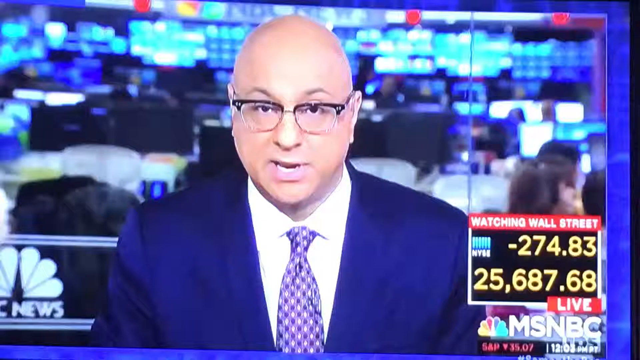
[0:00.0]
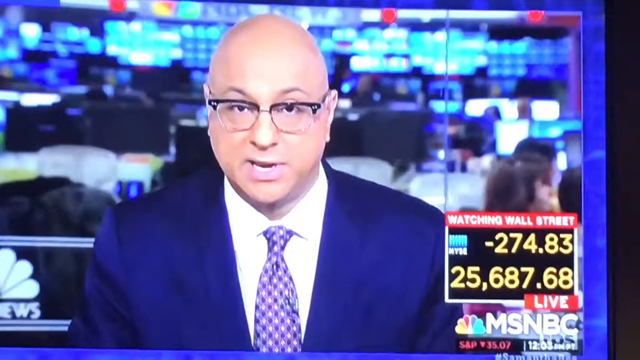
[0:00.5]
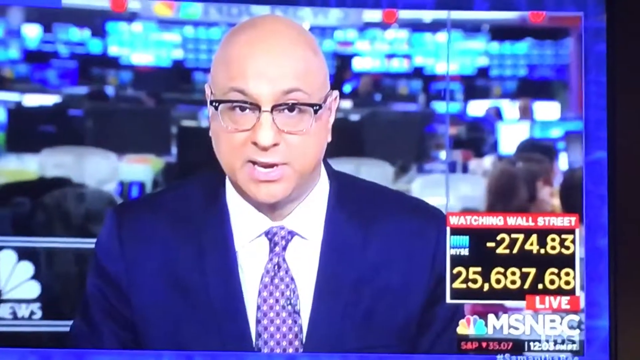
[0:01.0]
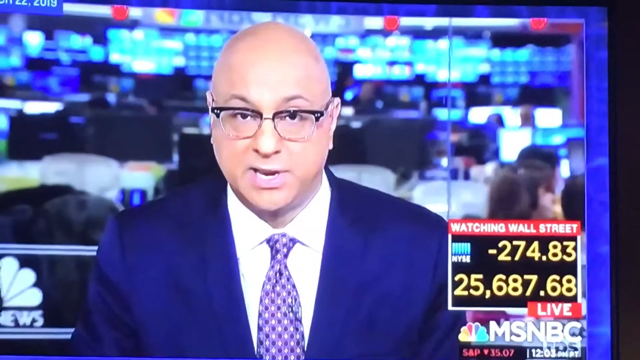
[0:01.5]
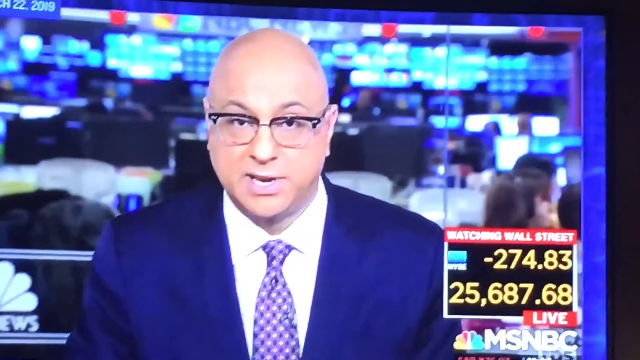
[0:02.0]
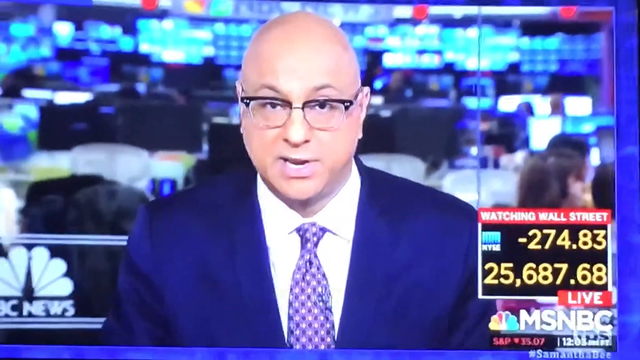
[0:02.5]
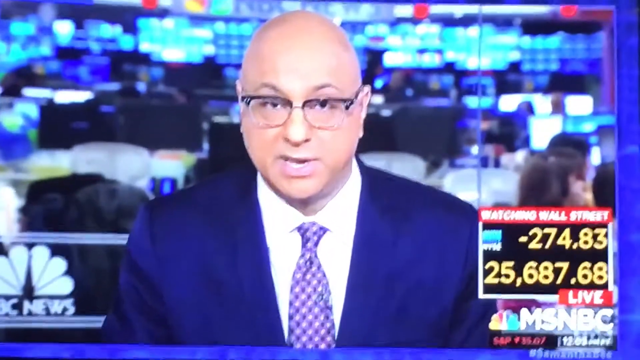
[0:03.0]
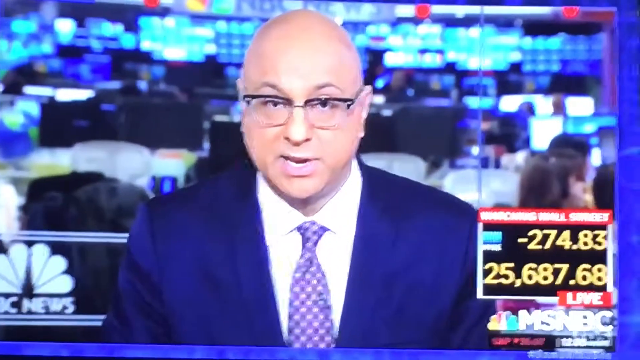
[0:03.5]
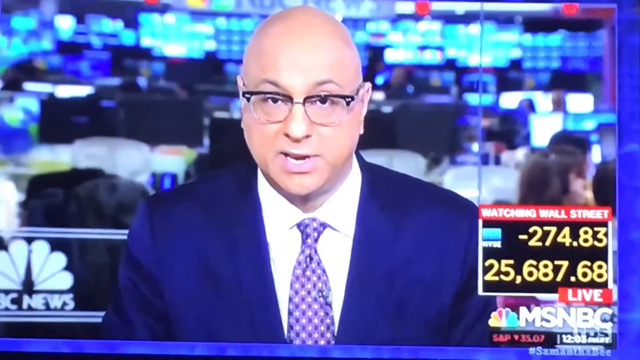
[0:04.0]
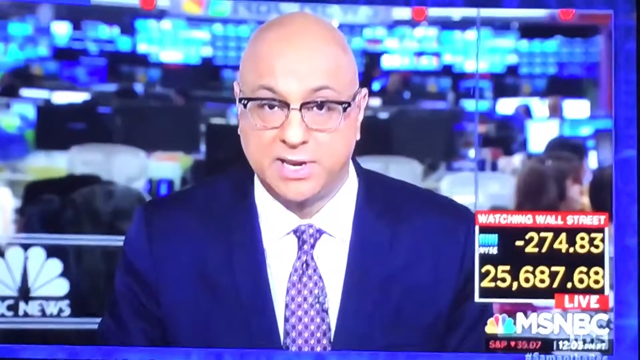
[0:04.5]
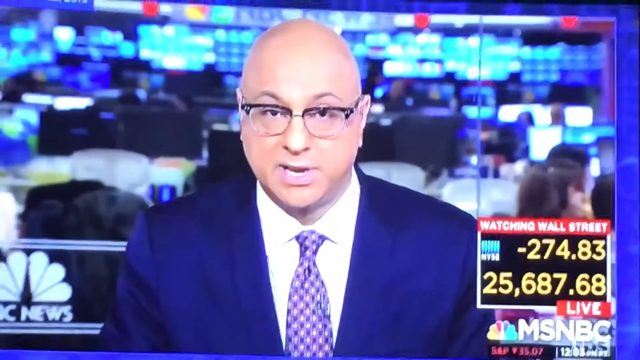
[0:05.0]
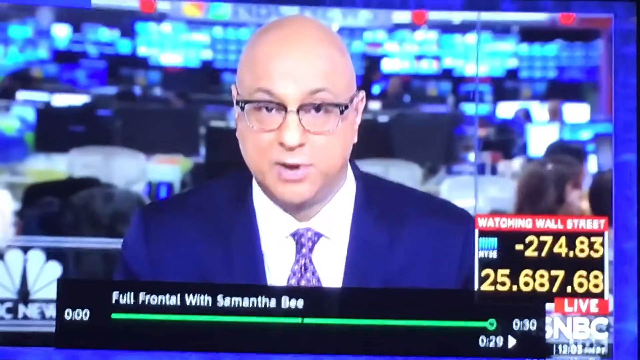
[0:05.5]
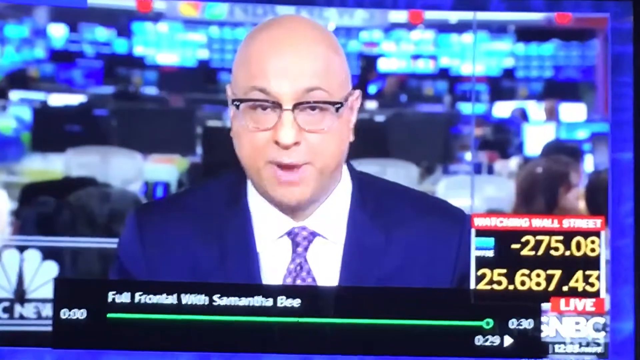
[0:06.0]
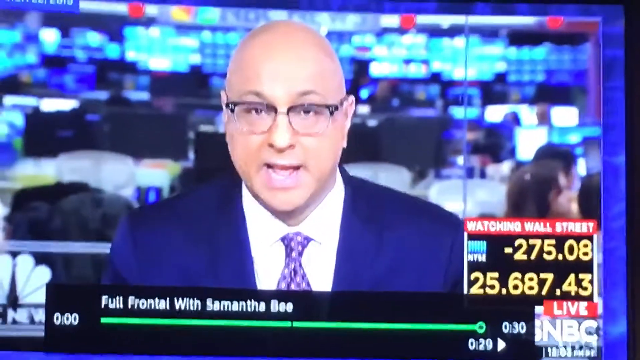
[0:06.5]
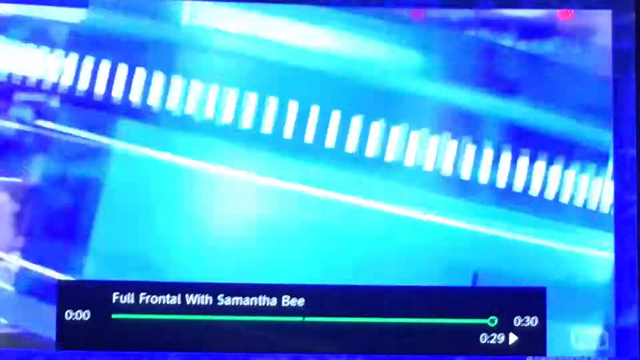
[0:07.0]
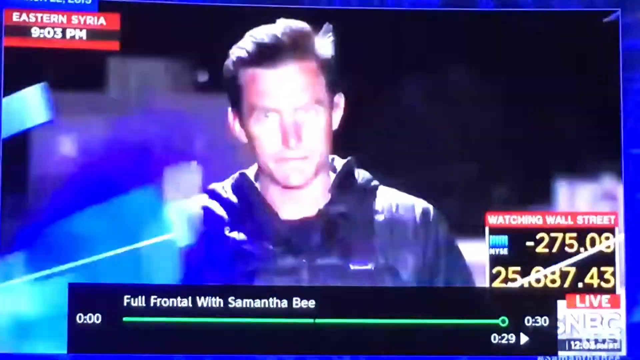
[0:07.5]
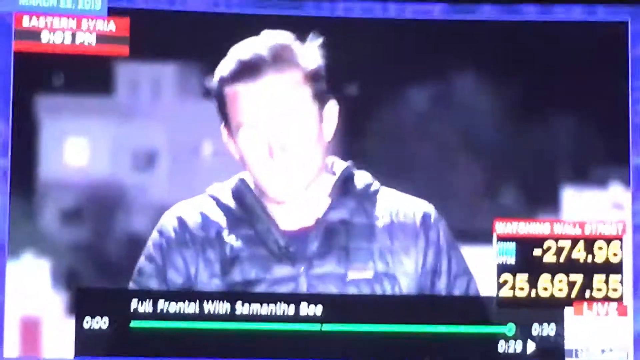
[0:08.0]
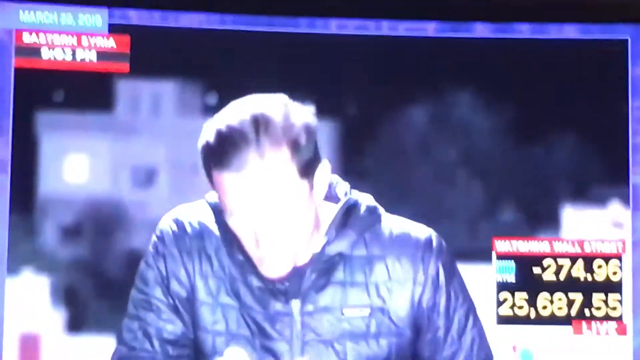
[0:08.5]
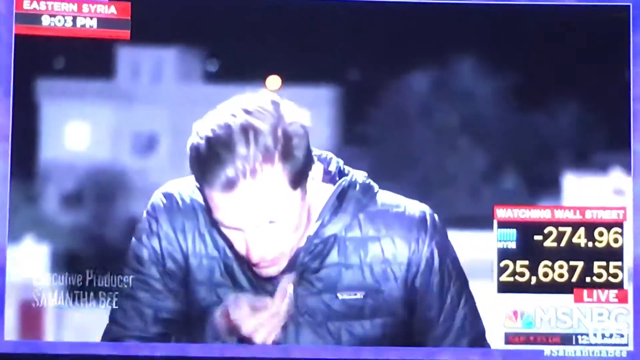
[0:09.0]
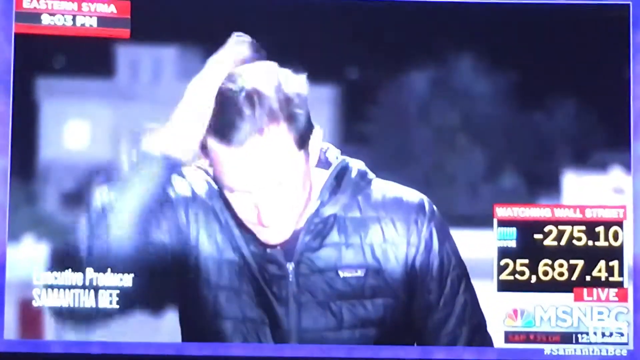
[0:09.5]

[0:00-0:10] The video shows a screen that is frozen while the camera kind of moves around. Then it starts to play, and white text on the screen reads "Full Frontal with Samantha Bee"; it looks like it was paused and then someone unpaused it. The NBC News logo is in the bottom-left corner, and "watching Wall Street" appears in white text on a red rectangle in the bottom-right corner with some yellow stock information. A man wearing a puffy black jacket is then shown. His face is hard to see because a reflection on the TV screen kind of blots it out, but he seems to spit in his hand and then smooth his hair back, as if slicking it back. The background behind him is dark and it takes place at night; there might be some kind of building in the background. White text in the bottom-left corner reads "Executive Producer Samantha Bee".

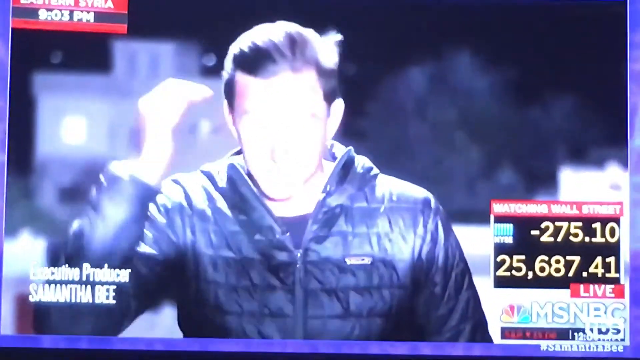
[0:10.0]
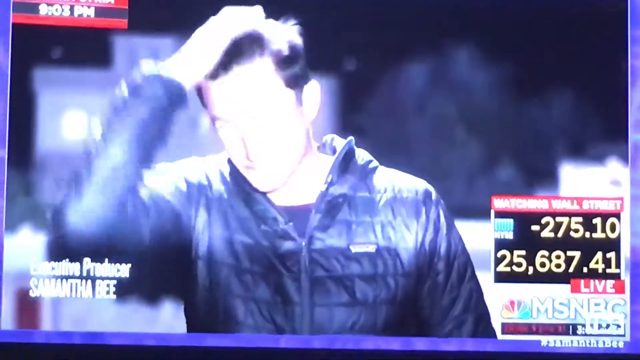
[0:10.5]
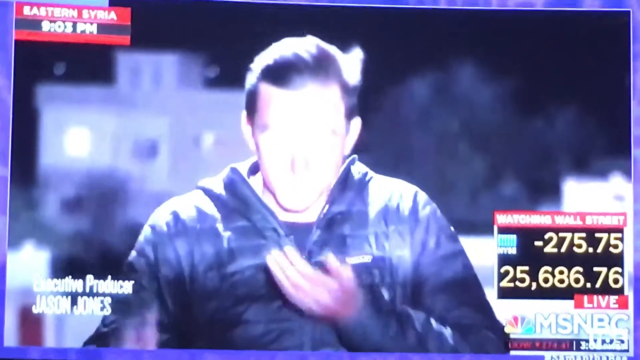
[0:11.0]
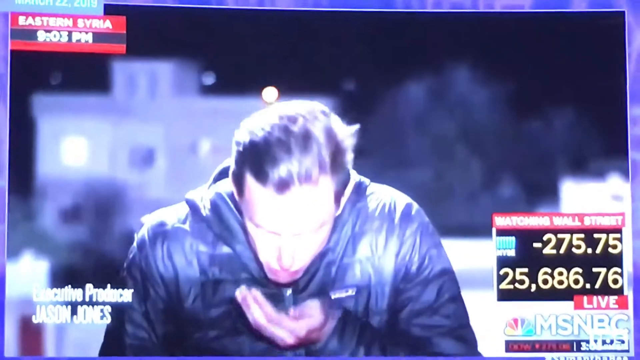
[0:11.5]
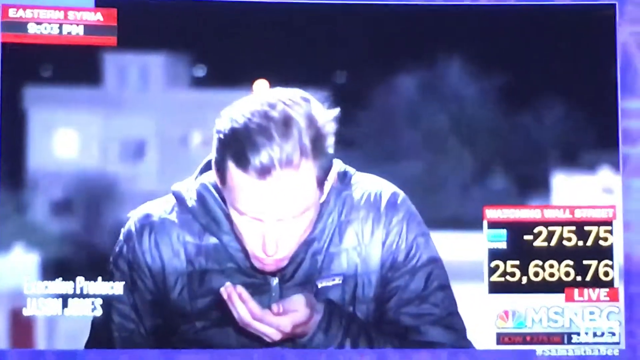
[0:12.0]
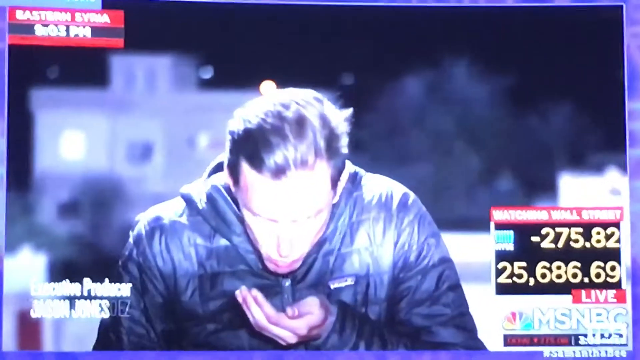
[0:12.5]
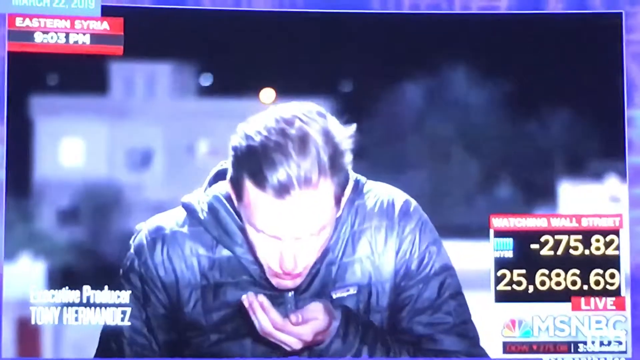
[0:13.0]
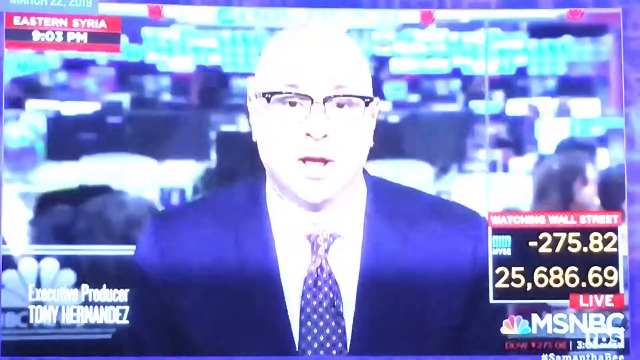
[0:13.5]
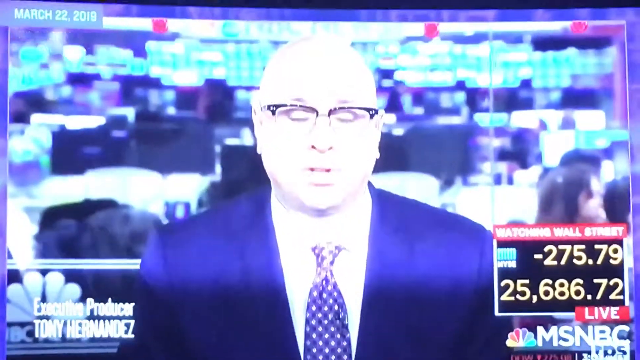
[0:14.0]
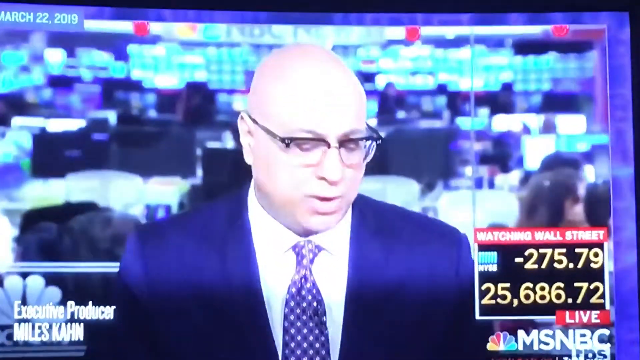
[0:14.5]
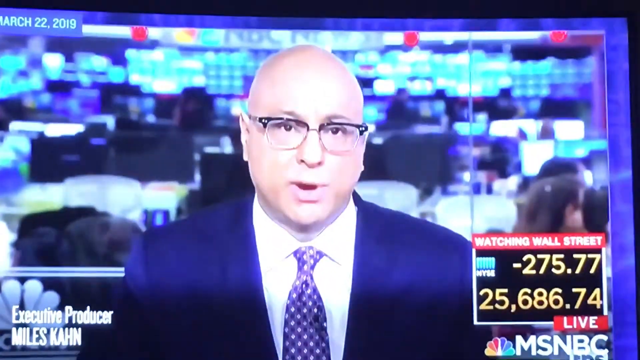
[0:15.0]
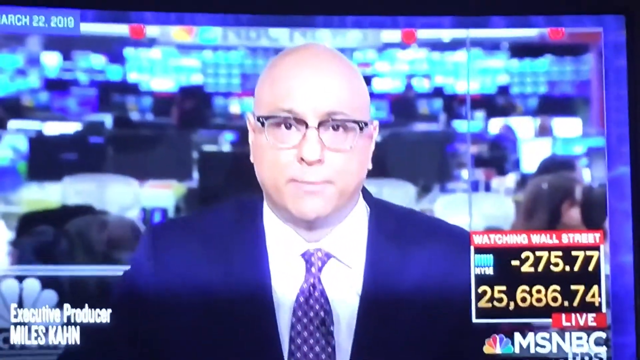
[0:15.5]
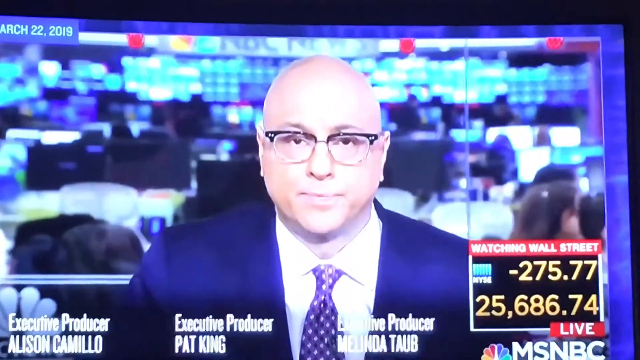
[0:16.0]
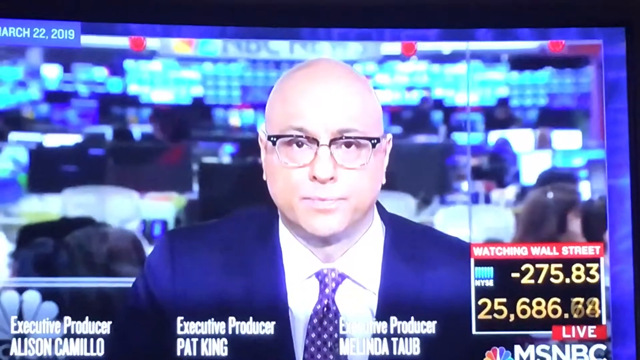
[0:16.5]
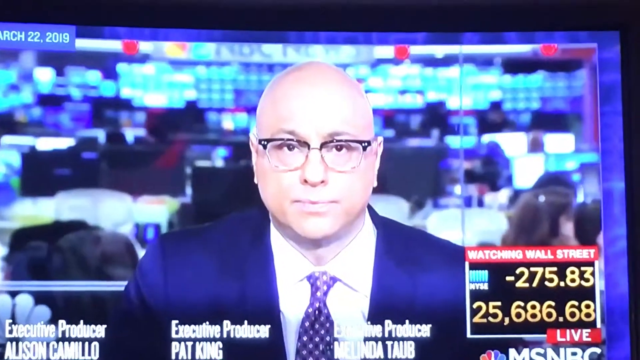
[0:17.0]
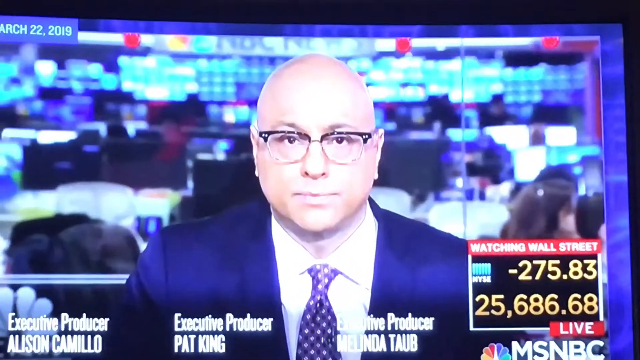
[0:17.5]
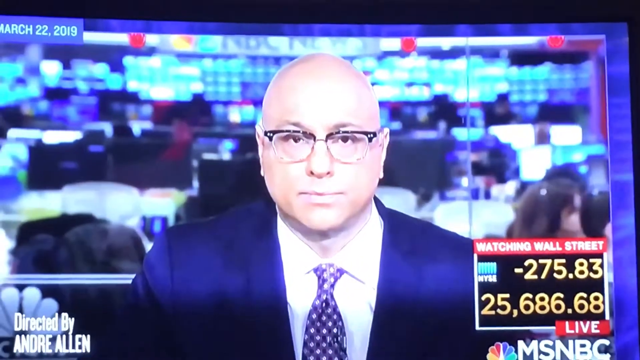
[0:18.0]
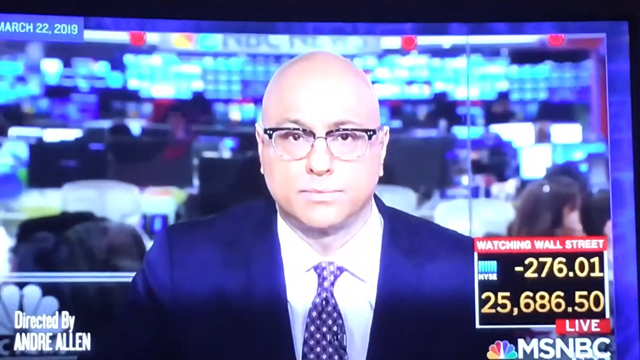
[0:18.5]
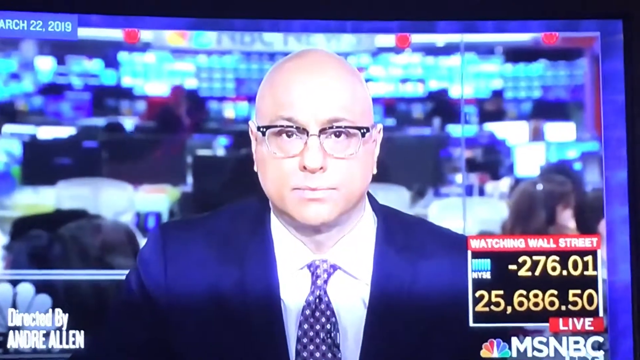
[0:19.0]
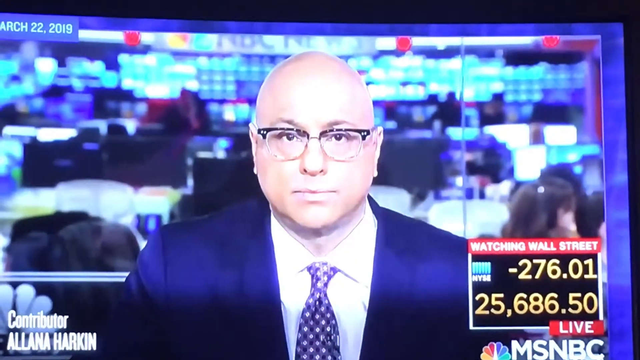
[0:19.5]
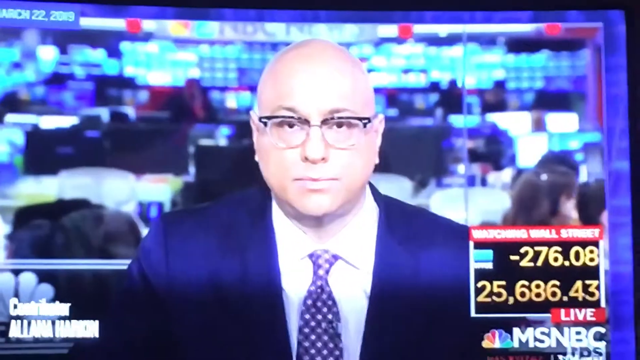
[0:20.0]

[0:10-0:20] A man smooths his hair, then starts spitting at his hand. The shot then switches back to a news anchor who is bald and wears black-rimmed glasses, a white shirt, a blue tie with a pattern on it, and a blue suit jacket. This is footage of a TV screen with a really bad glare that kind of washes out the people on it, making them hard to see. Credits appear at the bottom in white text, showing names and job titles, so it is probably the end of the show. The TBS logo is in the bottom-right corner in white, on a white rectangle, "live" appears in white text on a red rectangle, and the MSNBC logo is also in the bottom-right corner. Behind the news anchor appears to be some kind of news station, with people kind of moving around and computers in the background, which is kind of blurred.